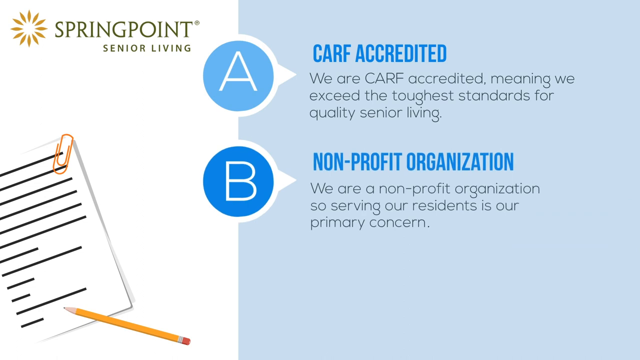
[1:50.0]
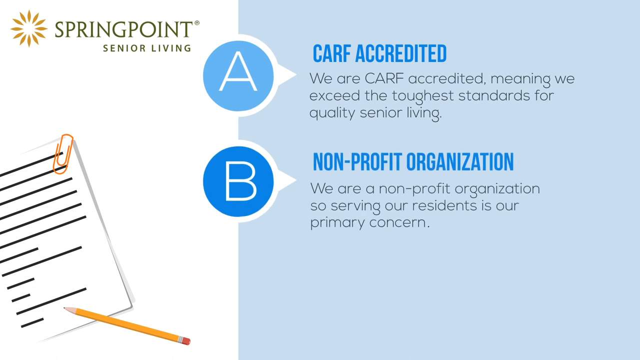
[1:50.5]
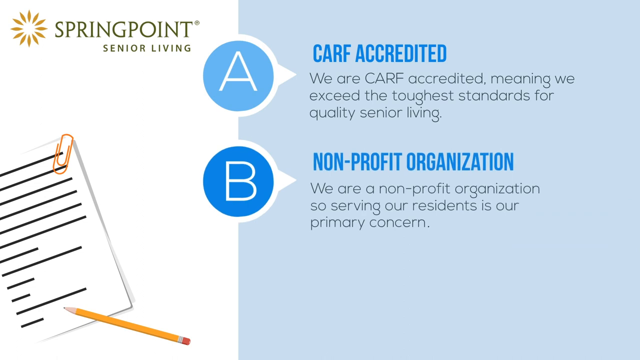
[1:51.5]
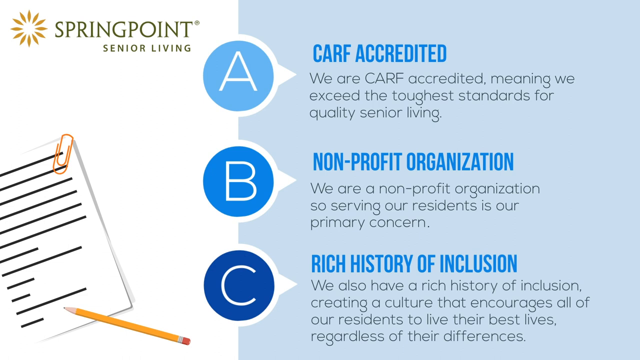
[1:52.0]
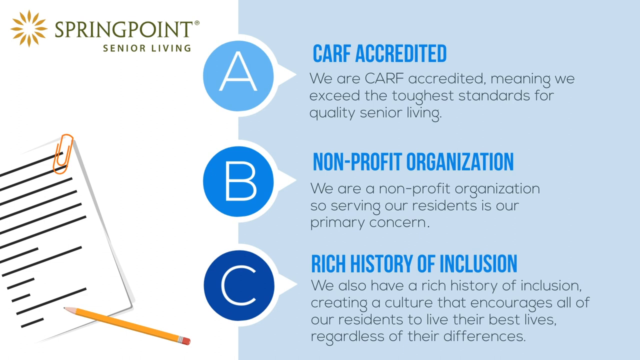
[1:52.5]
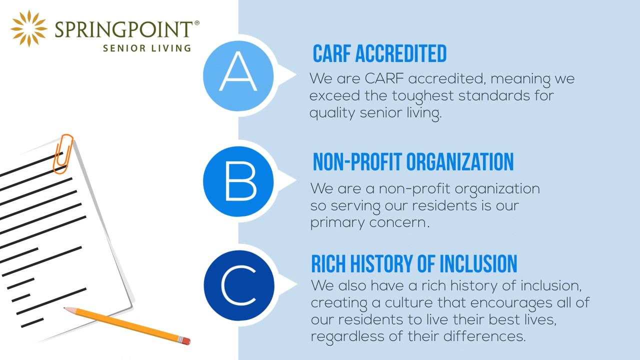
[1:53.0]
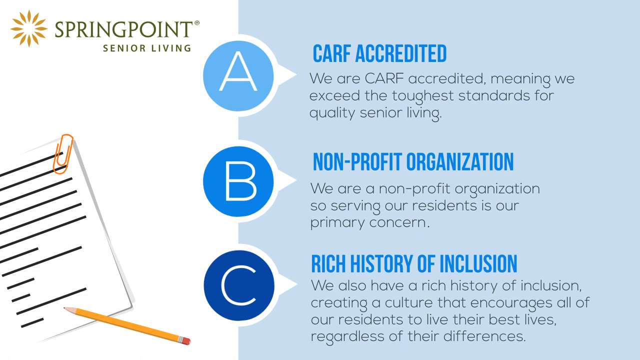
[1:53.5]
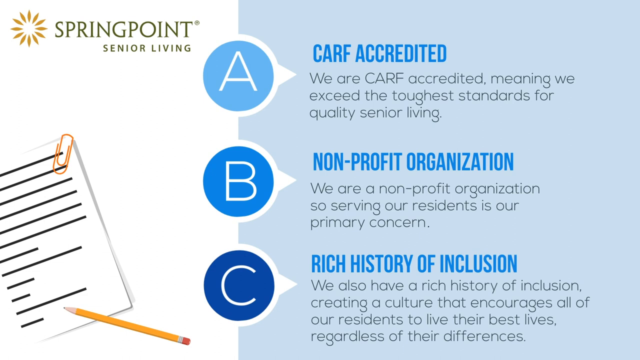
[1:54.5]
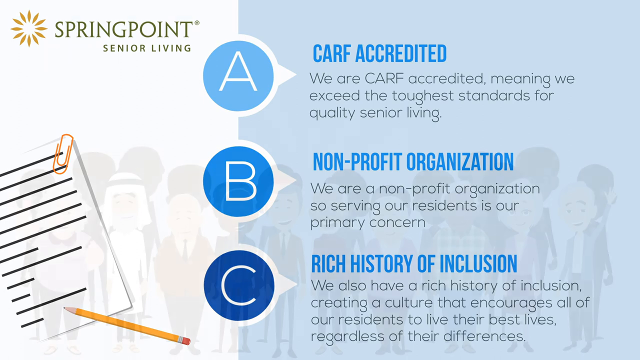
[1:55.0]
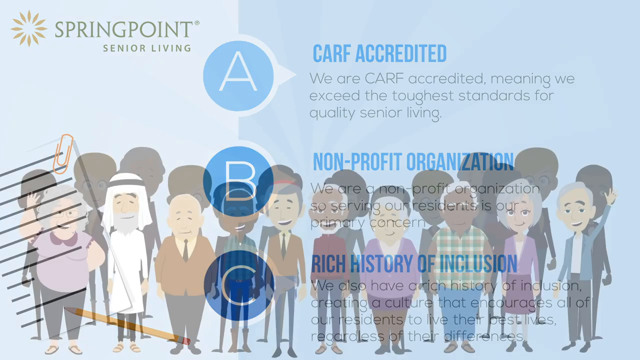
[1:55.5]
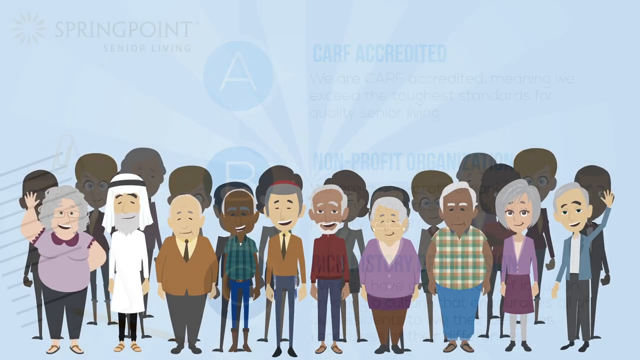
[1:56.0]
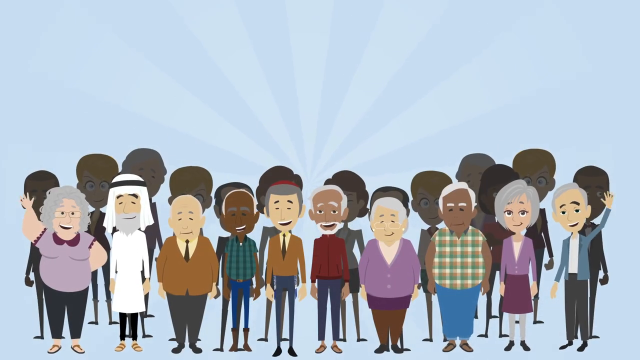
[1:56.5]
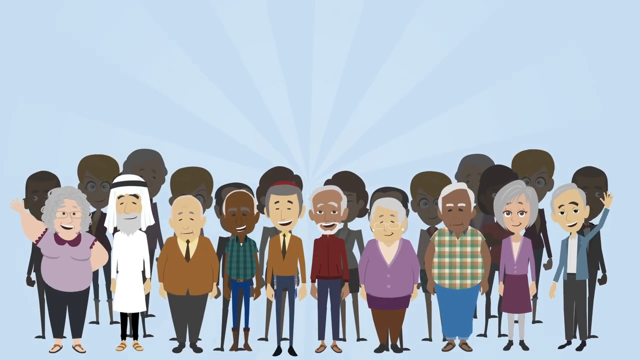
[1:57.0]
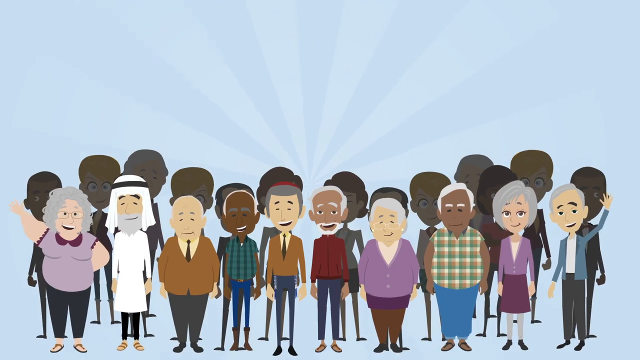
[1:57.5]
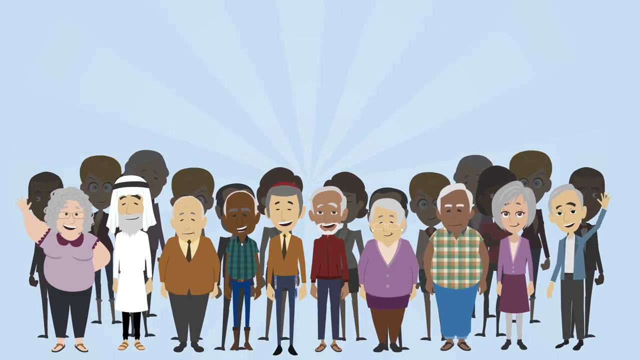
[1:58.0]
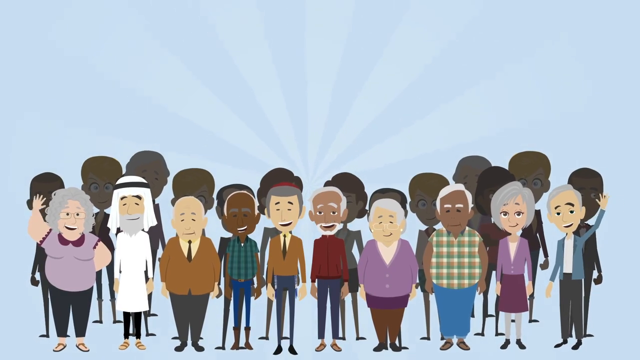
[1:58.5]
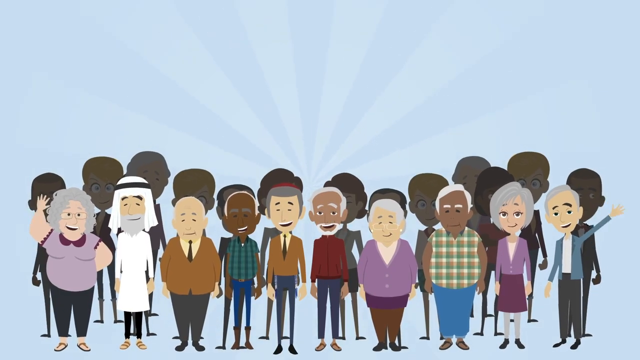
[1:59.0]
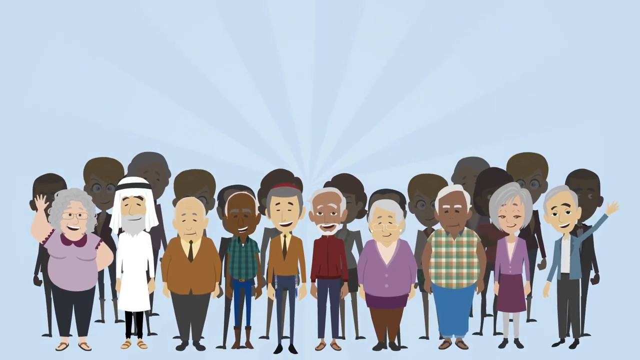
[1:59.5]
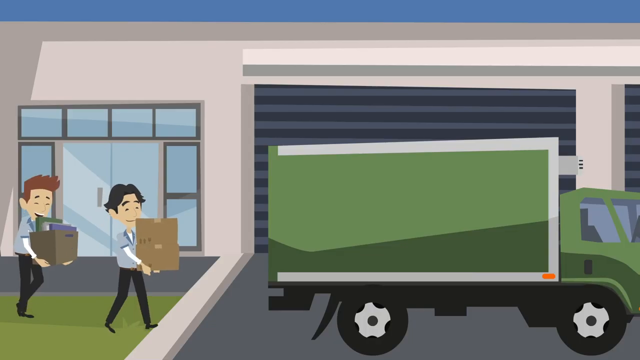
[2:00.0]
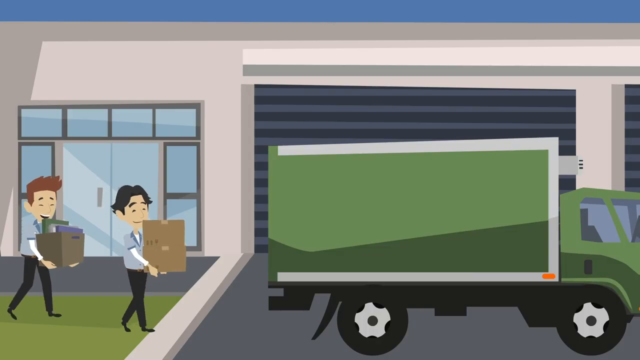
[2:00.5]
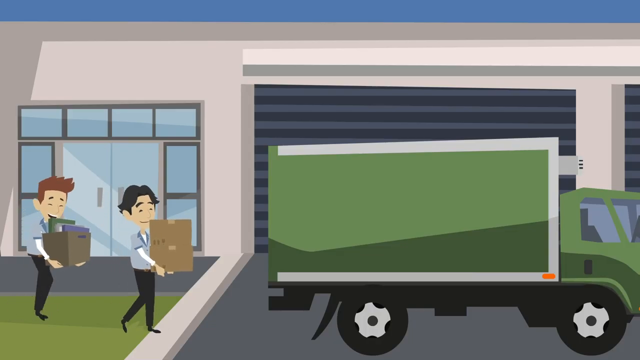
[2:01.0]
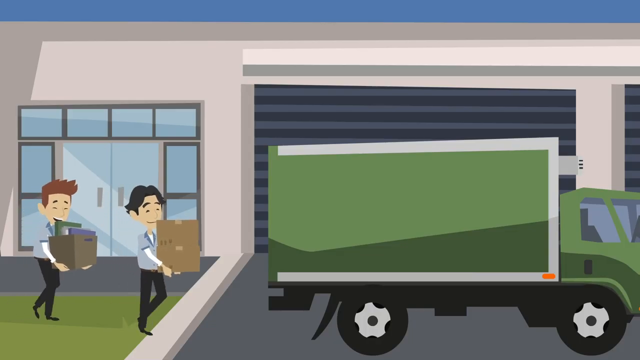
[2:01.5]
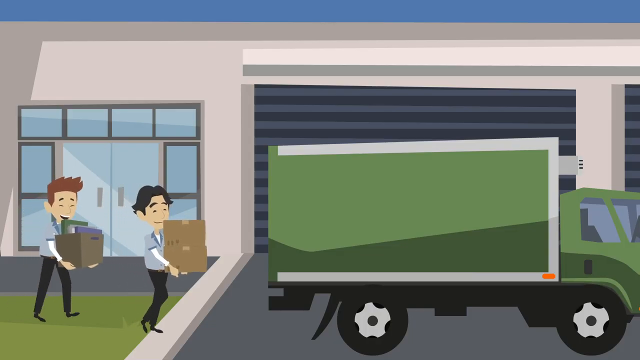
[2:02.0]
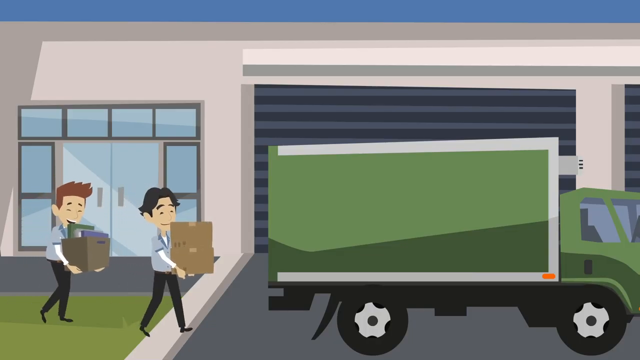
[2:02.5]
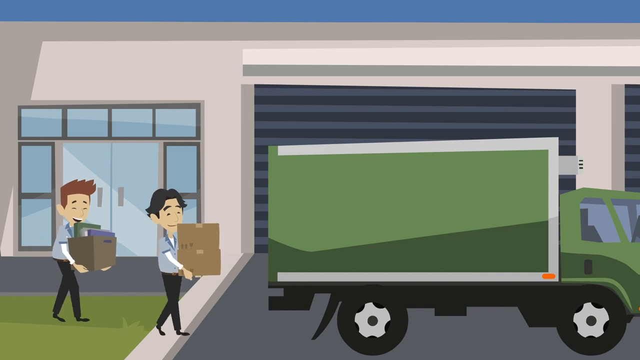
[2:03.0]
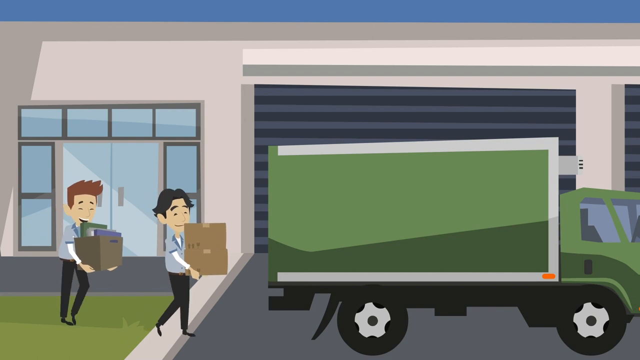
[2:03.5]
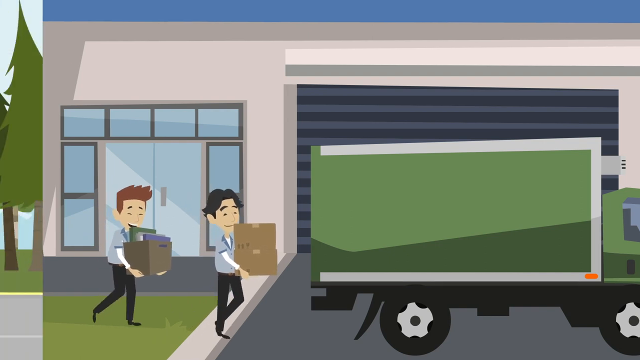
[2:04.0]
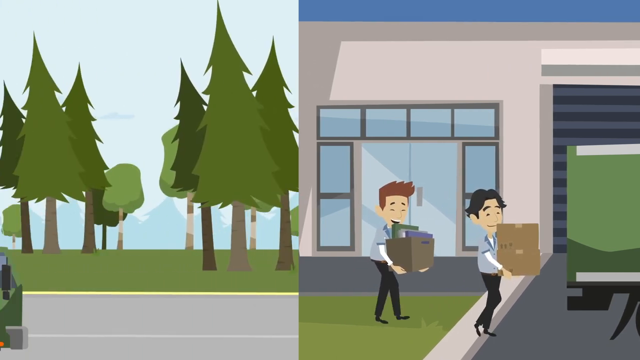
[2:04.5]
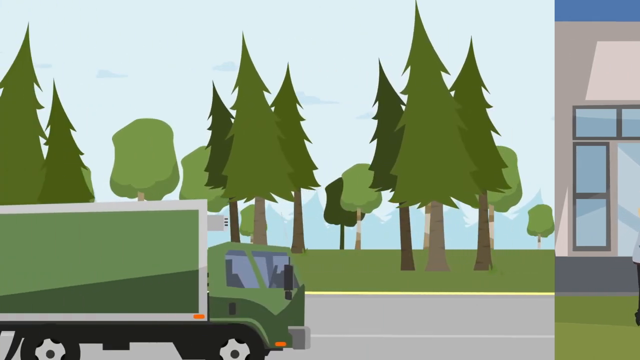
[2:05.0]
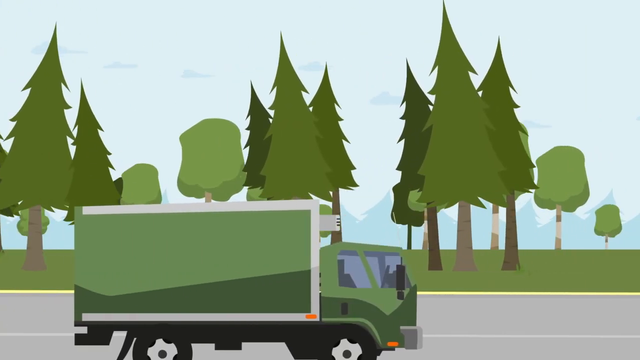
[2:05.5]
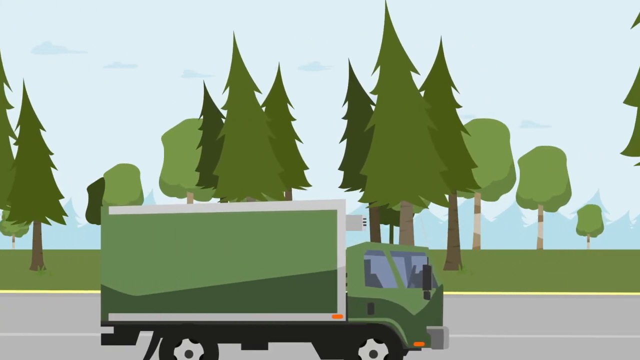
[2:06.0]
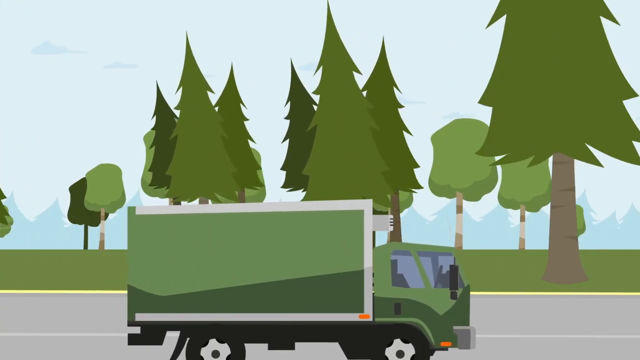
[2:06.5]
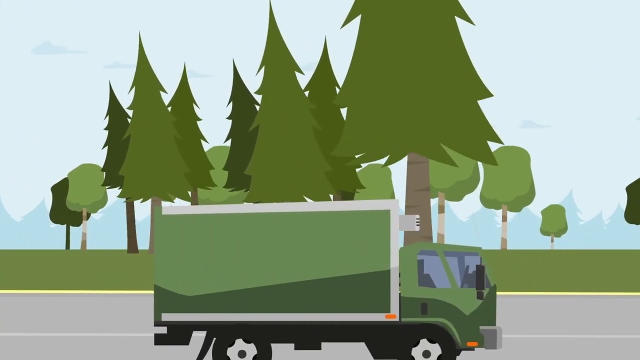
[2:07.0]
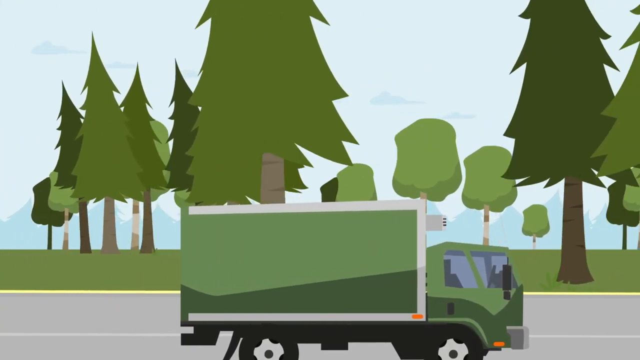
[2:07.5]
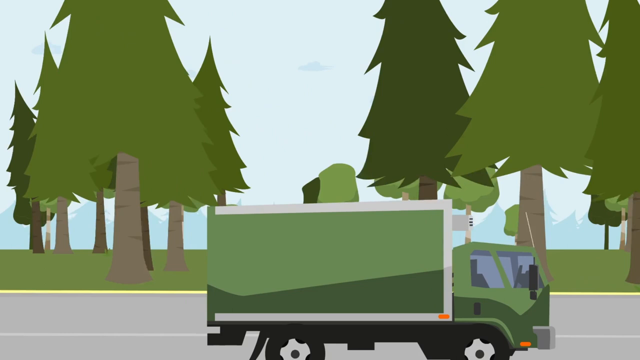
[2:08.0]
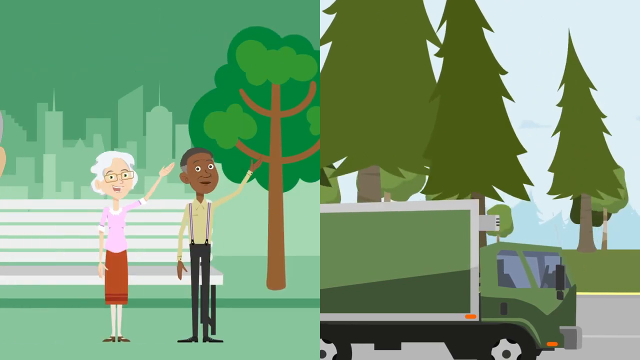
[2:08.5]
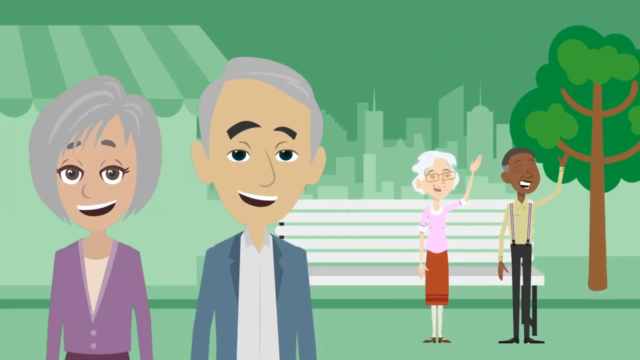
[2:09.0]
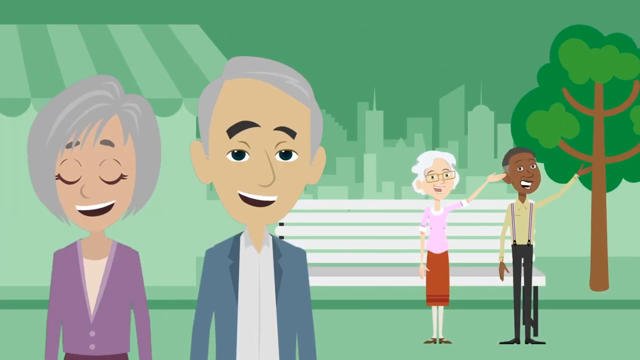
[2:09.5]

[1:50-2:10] On the same screen, a third bullet point, C, reads "Rich History of Inclusion," with subtext reading "We also have a rich history of inclusion, creating a culture that encourages all of our residents to live their best lives." The next scene shows a group of people of all different colours, walks of life and cultures, with one woman on the left waving at the camera, one man on the right waving, and all the other people smiling. Then two men carry boxes into the back of a green truck, and the truck drives down the road. Another scene shows four elderly people, with two elderly people in the background waving towards the two elderly people more in the foreground.